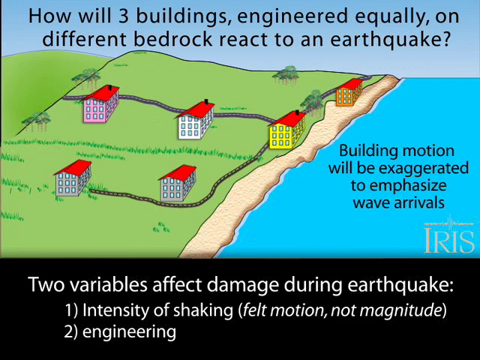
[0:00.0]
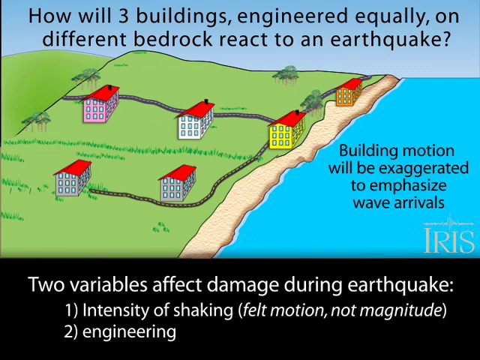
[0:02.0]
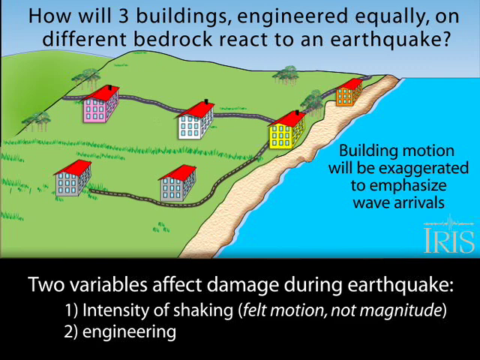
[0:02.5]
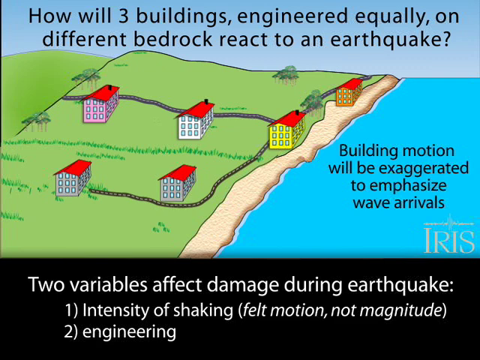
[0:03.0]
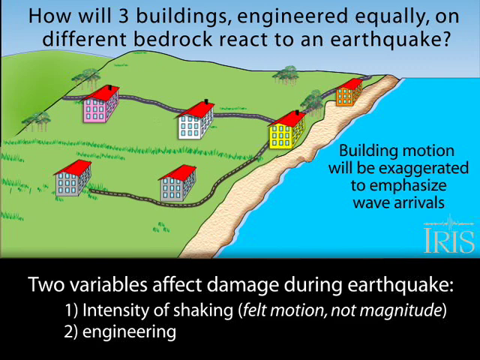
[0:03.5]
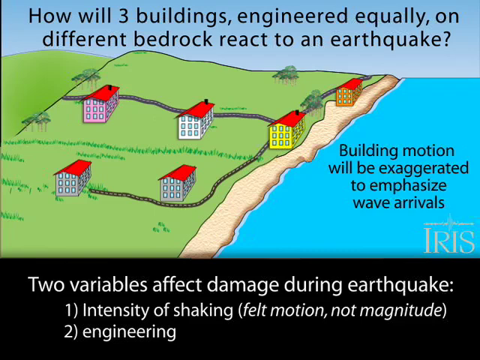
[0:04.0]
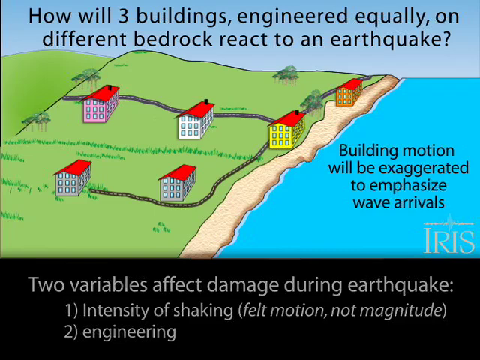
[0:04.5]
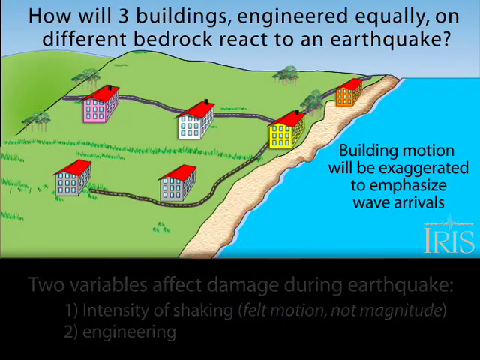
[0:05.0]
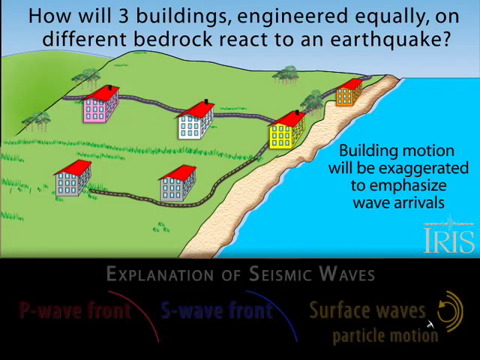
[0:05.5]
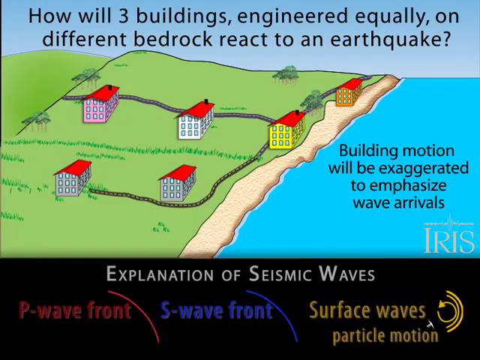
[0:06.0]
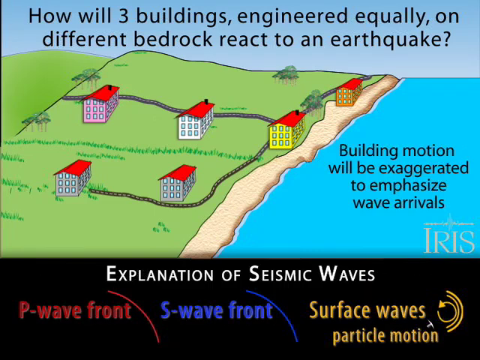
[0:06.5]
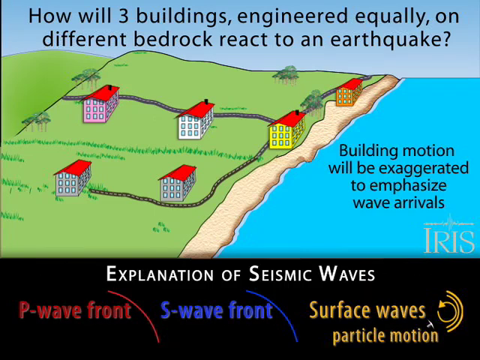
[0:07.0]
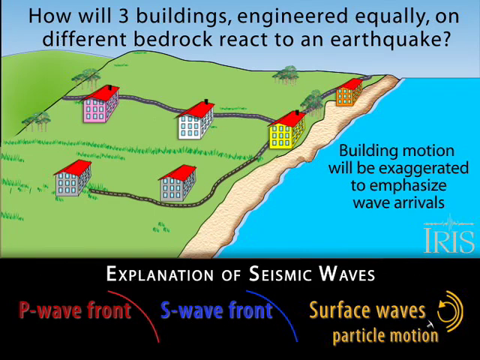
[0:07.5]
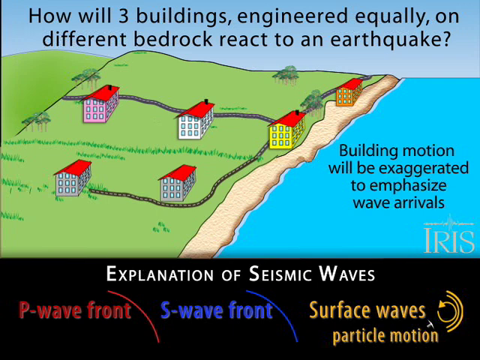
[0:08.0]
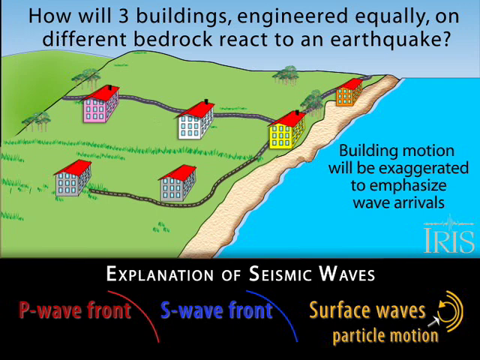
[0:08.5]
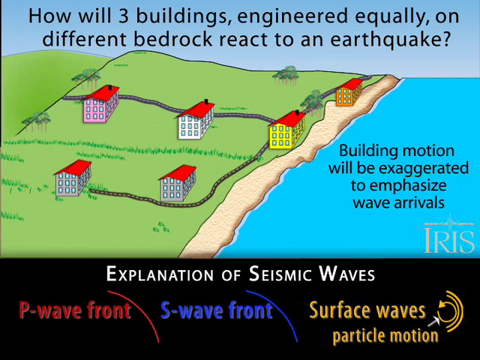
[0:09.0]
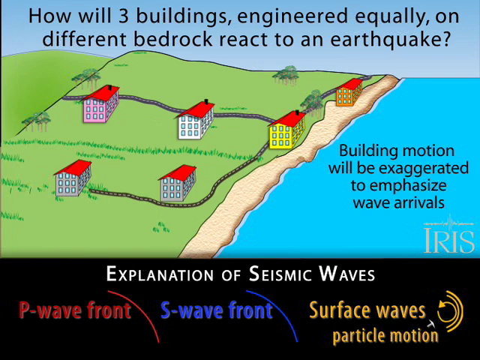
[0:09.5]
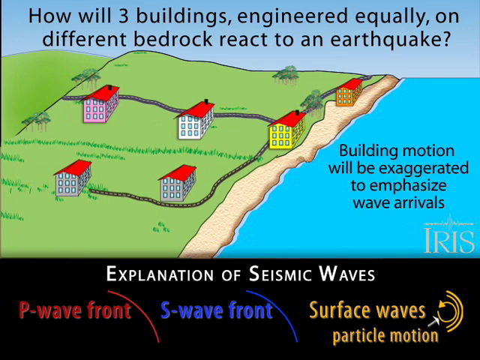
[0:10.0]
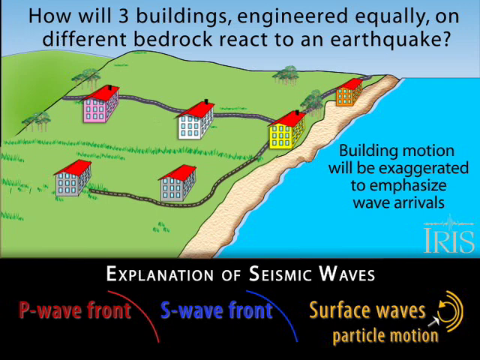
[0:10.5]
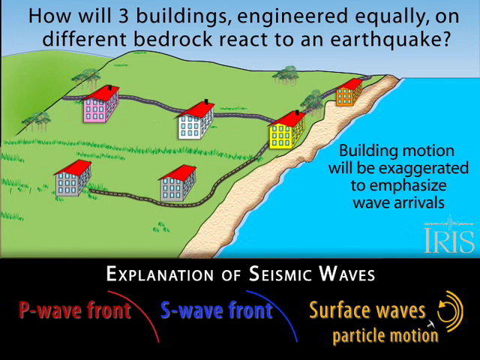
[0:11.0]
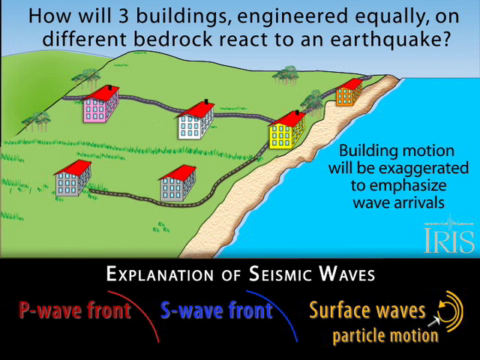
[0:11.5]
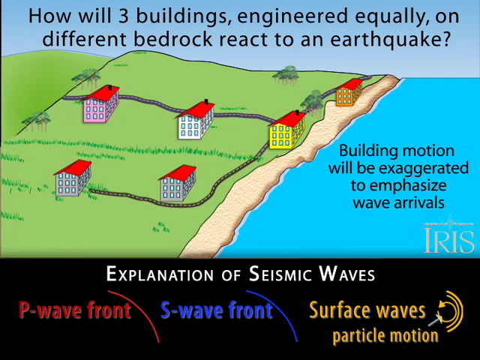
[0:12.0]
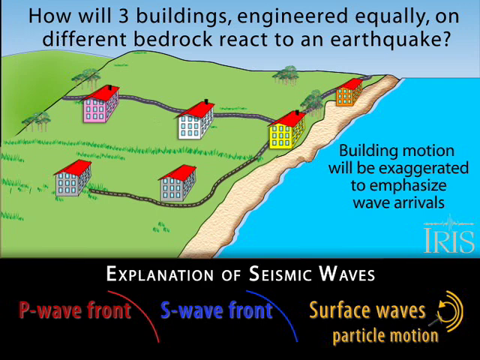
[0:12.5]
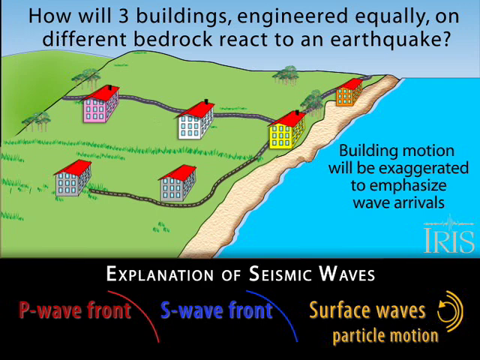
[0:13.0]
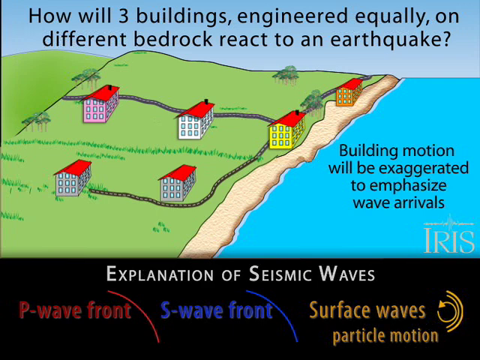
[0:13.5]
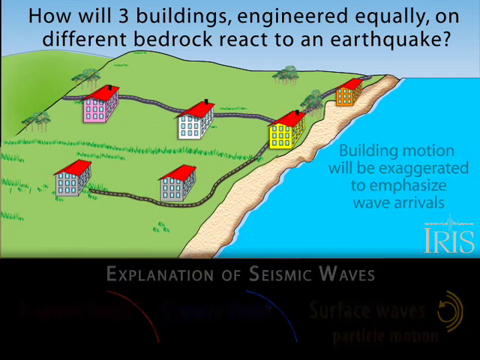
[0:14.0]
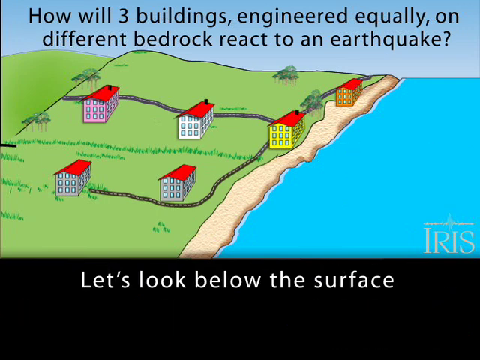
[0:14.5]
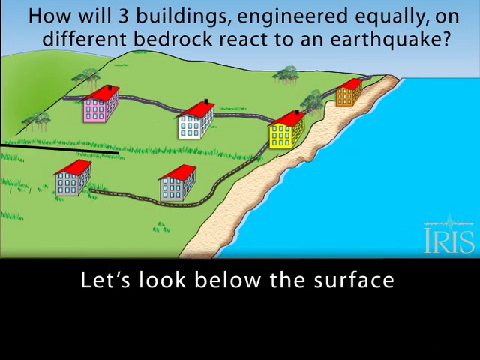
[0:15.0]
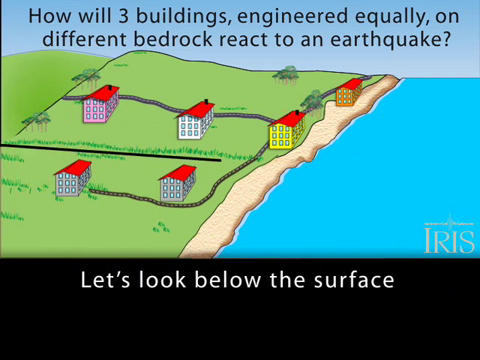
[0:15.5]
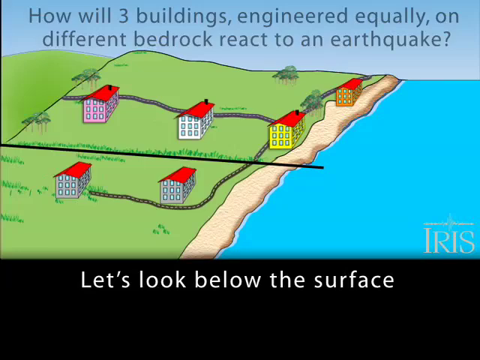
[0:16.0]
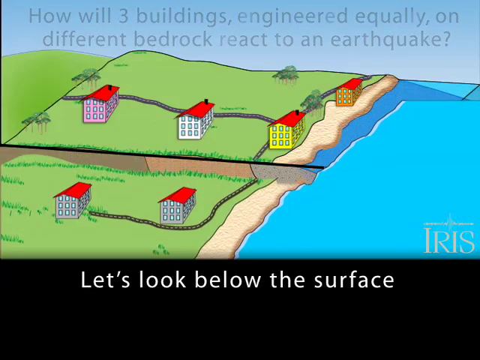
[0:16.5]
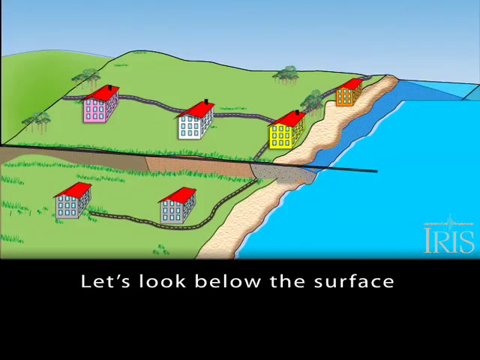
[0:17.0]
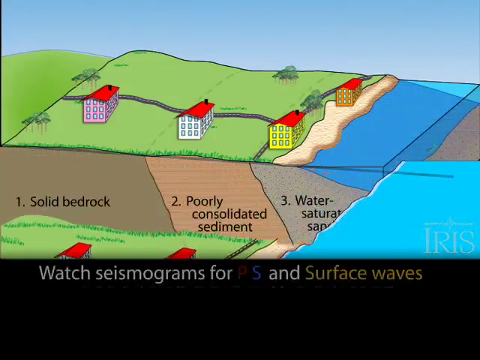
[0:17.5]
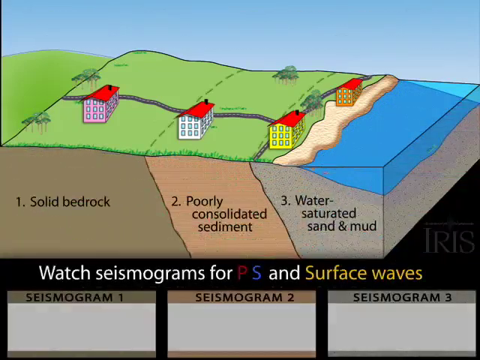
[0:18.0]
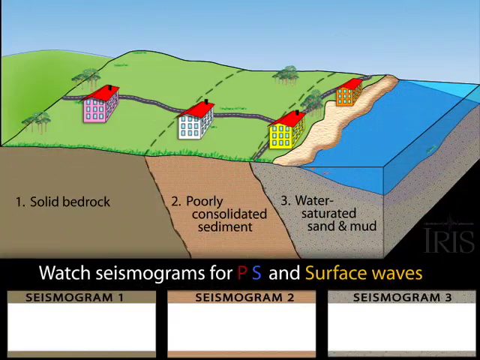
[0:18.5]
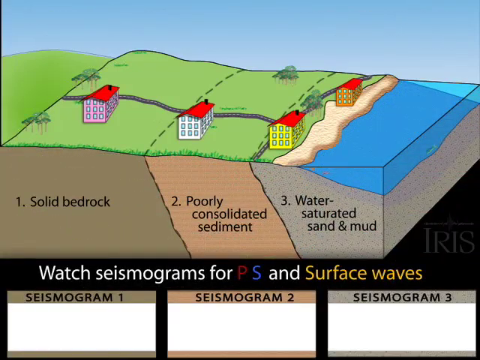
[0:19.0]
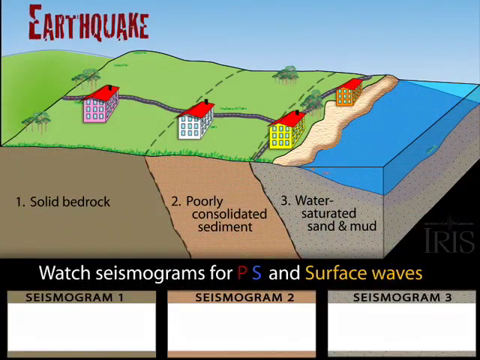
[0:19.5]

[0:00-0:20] The video concerns engineering blocks and earthquake damage, showing houses engineered exactly the same on different ground. There is an ocean or large body of water, a beach, sand and pavement, with houses built going up a hilltop. There are six houses in total: one built in the sand, one next to it, two behind it. The video shows the different variables affecting earthquake damage. The word "iris" appears in the bottom right-hand corner. The houses move along with the trees. The setting is the side of a hill or cliff, with noticeable textures of different types of grass, hill and sand.